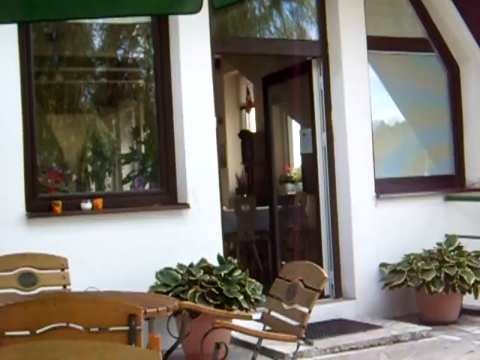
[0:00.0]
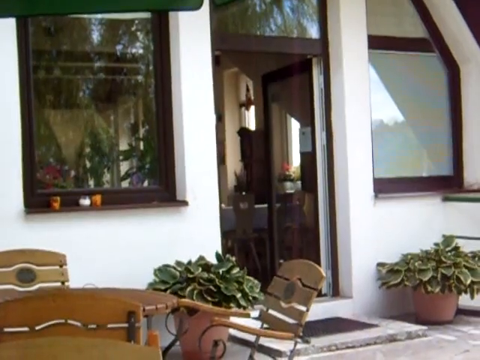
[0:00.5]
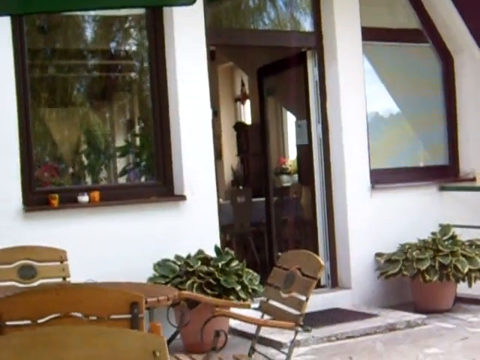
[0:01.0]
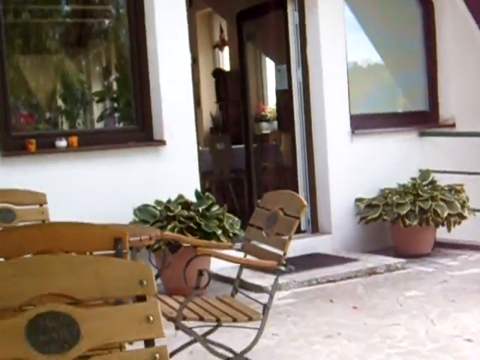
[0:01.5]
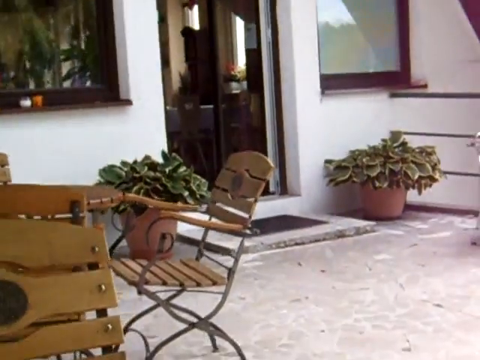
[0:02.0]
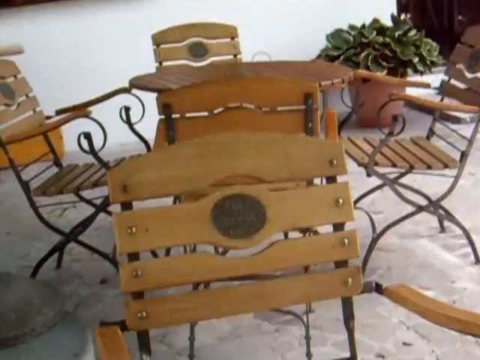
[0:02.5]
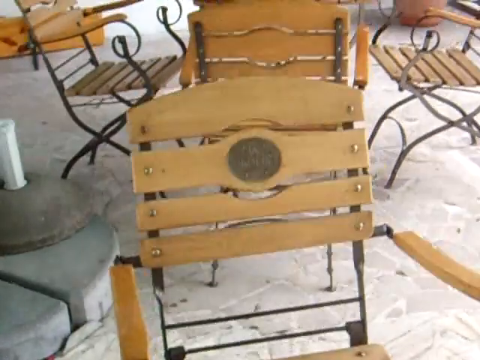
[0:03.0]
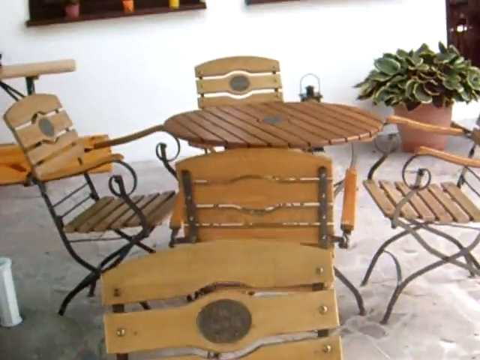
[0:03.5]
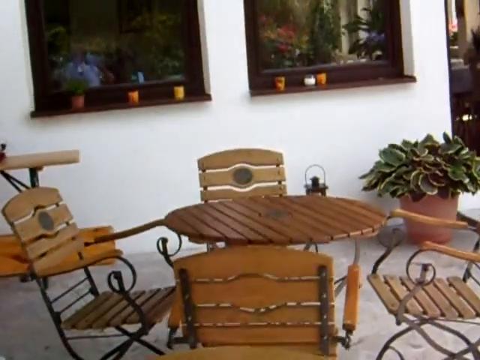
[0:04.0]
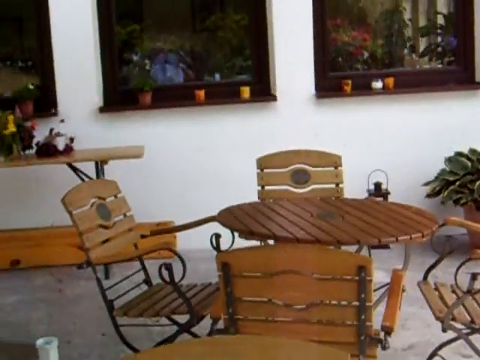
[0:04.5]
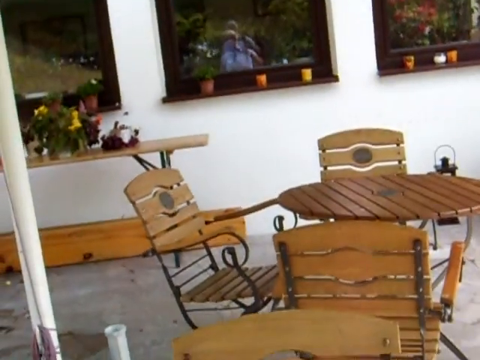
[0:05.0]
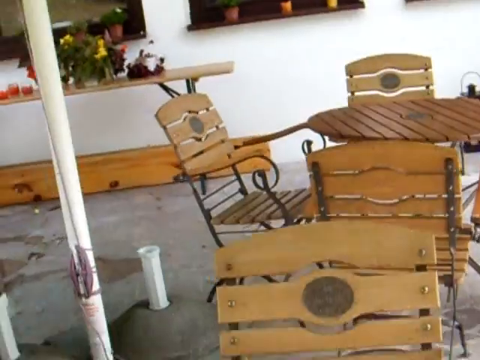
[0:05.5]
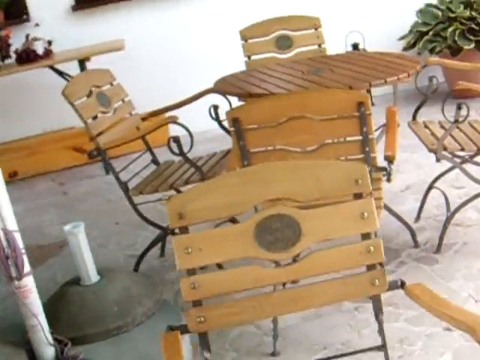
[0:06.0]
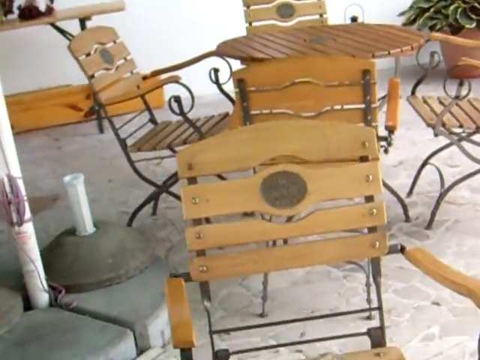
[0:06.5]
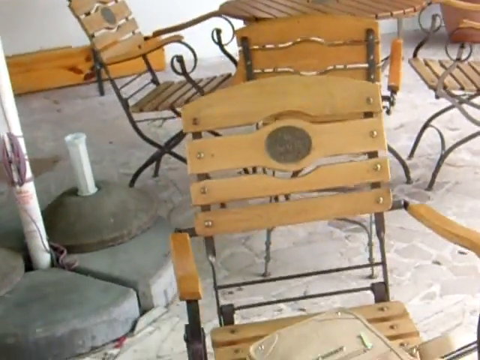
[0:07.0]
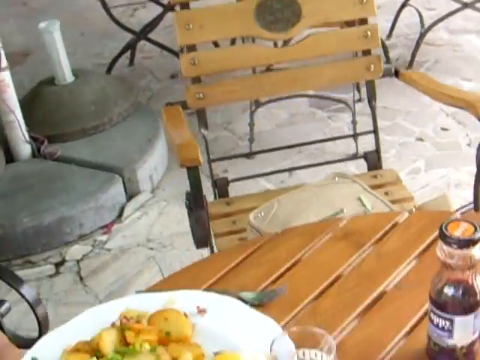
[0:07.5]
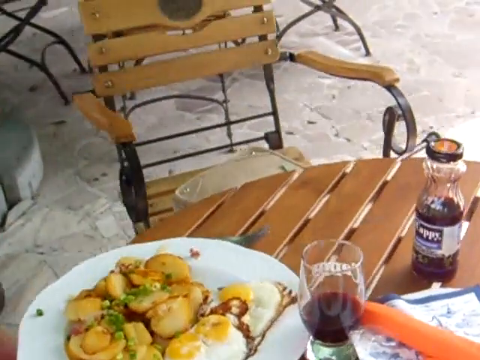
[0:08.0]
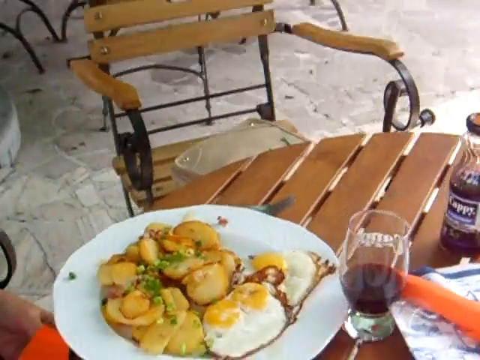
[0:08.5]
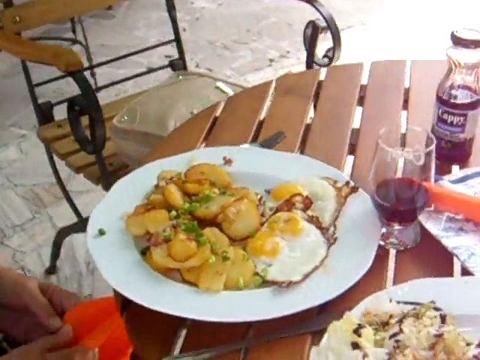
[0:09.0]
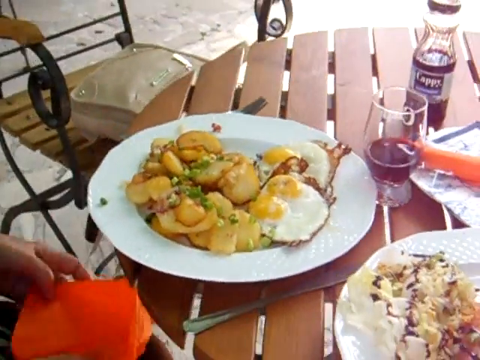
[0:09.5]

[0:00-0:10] The outside of a house is shown from its porch, with some lawn furniture for outdoor use. The house is beige with dark brown borders. On a table there is a white plate holding an unidentified food; the plate's center dips in deeper than a normal plate. In front of the plate is a glass cup of a red substance. The plate is viewed from the right side, and there is also a bottle, possibly of juice, with "Cappy" on it in white.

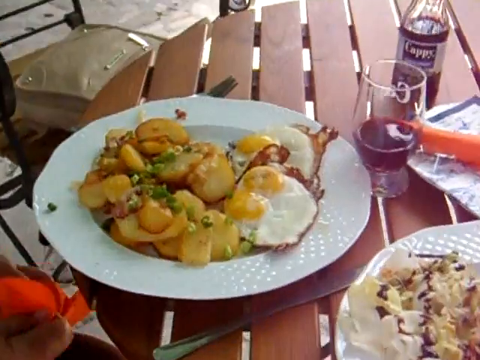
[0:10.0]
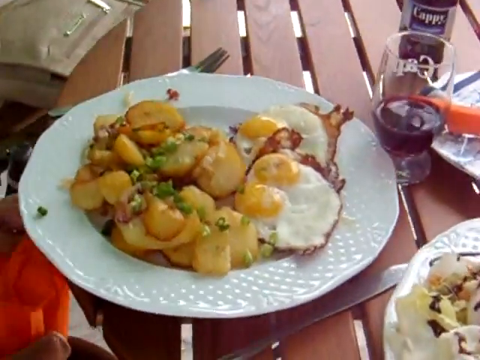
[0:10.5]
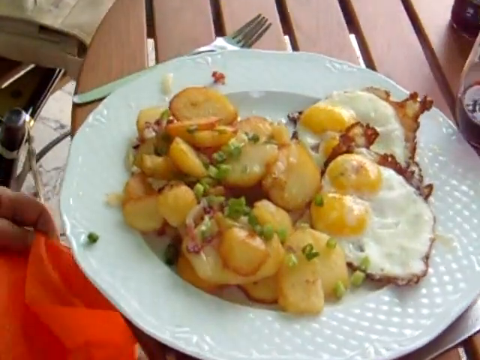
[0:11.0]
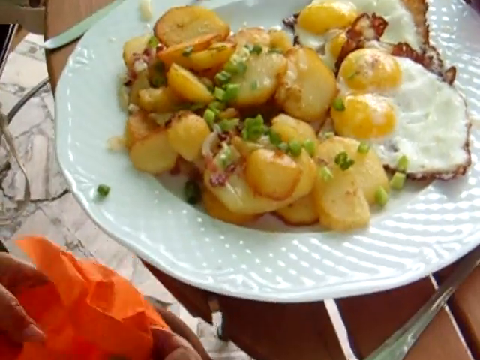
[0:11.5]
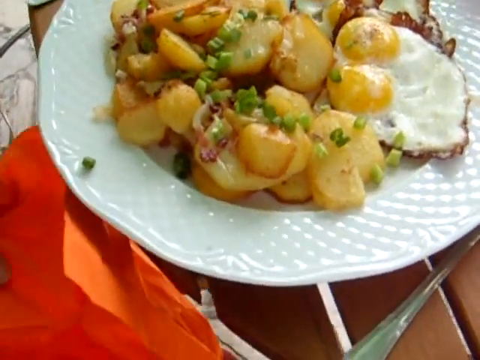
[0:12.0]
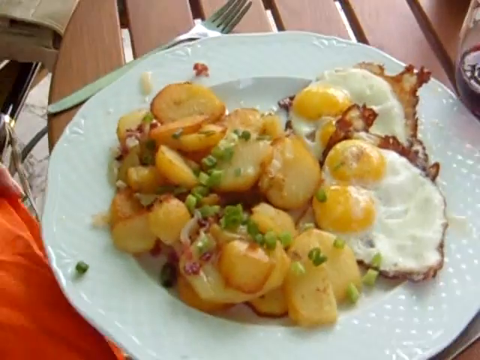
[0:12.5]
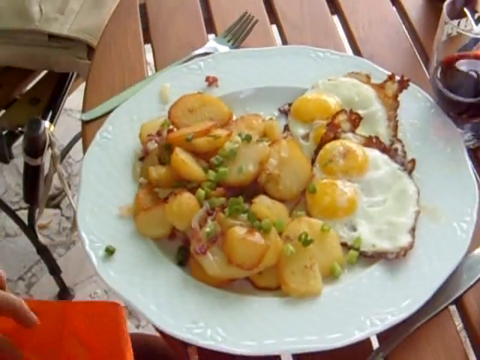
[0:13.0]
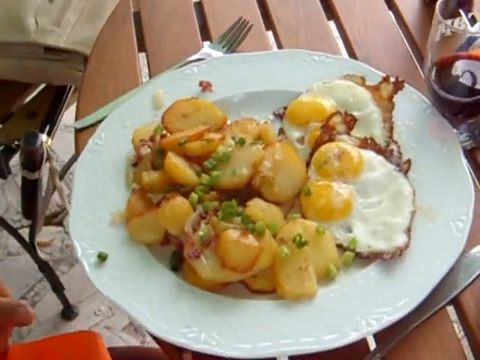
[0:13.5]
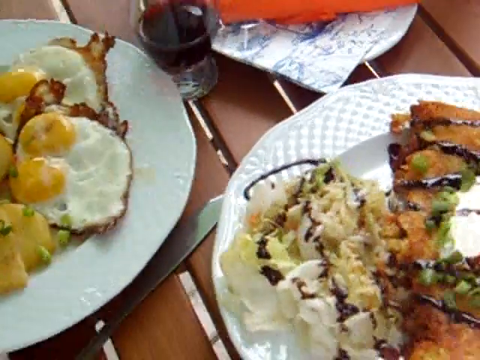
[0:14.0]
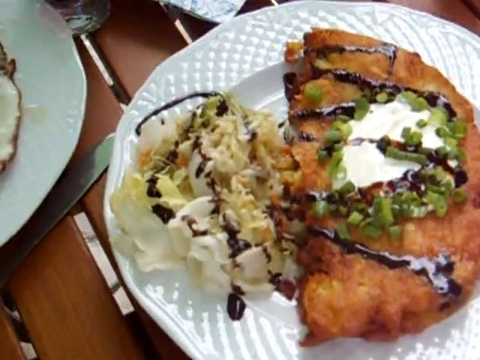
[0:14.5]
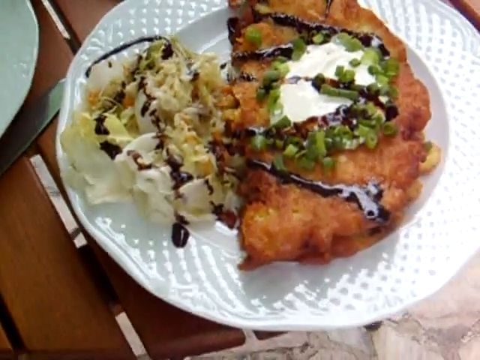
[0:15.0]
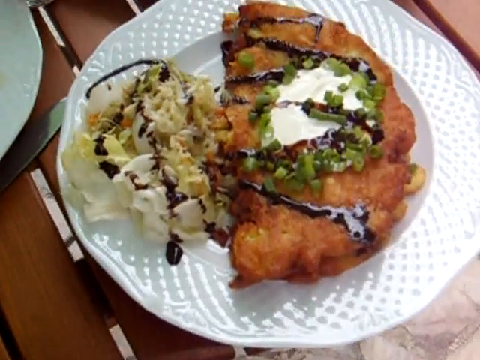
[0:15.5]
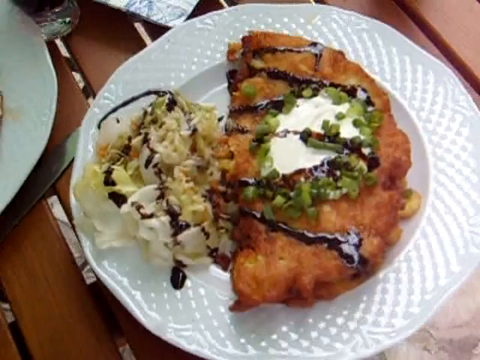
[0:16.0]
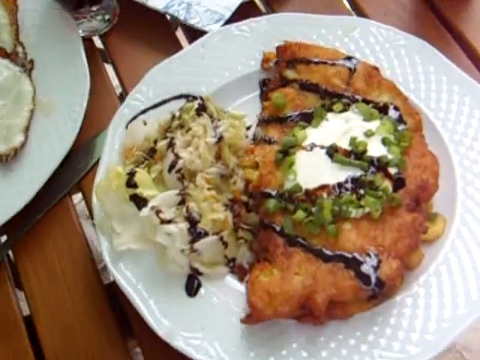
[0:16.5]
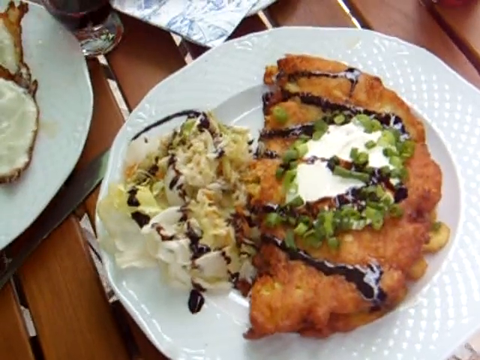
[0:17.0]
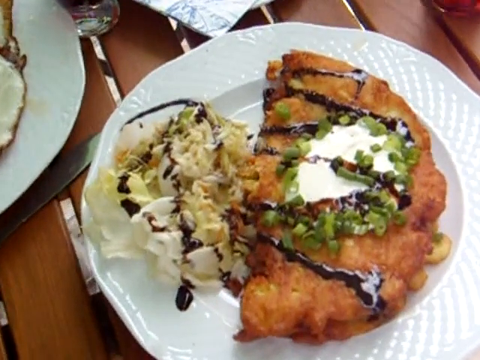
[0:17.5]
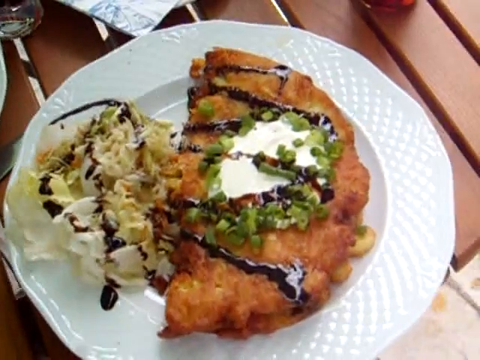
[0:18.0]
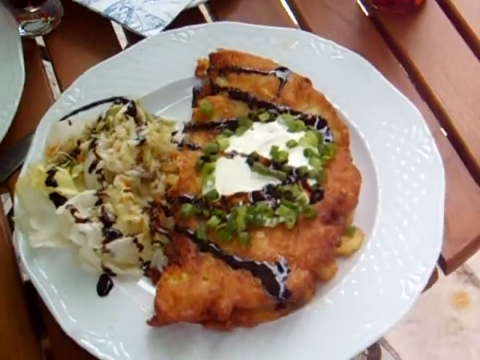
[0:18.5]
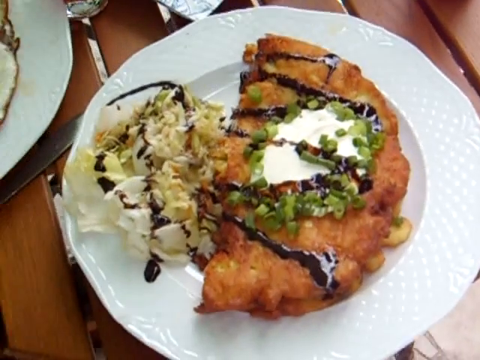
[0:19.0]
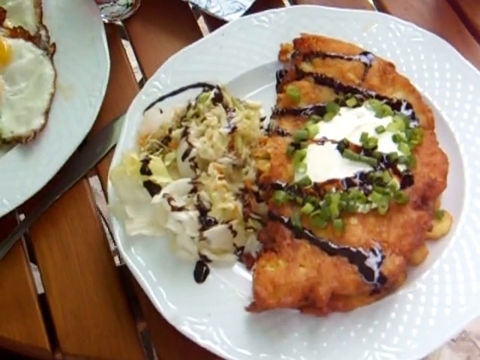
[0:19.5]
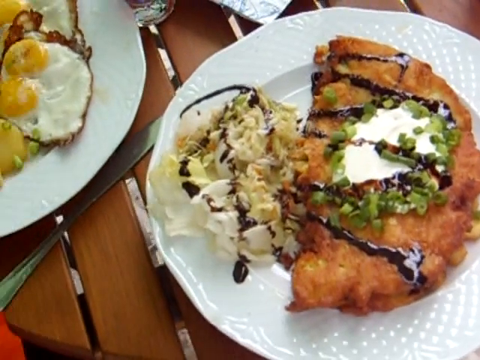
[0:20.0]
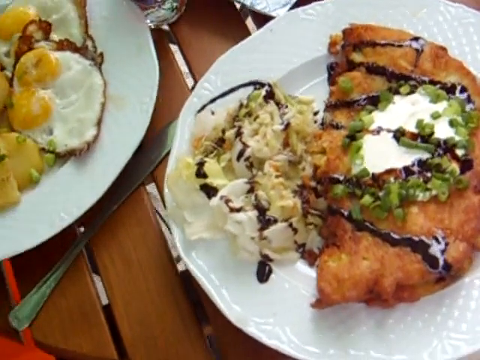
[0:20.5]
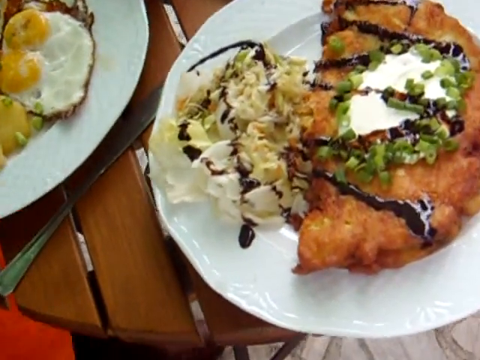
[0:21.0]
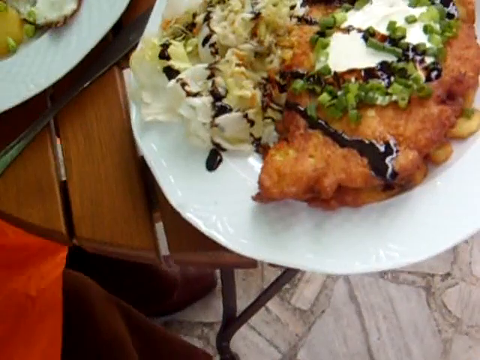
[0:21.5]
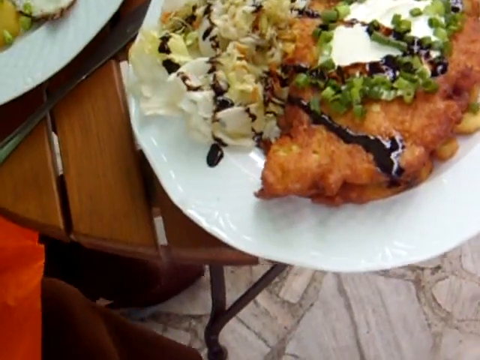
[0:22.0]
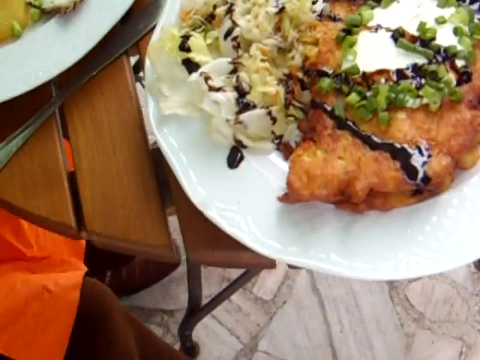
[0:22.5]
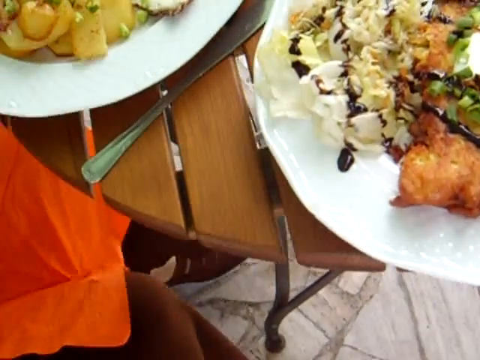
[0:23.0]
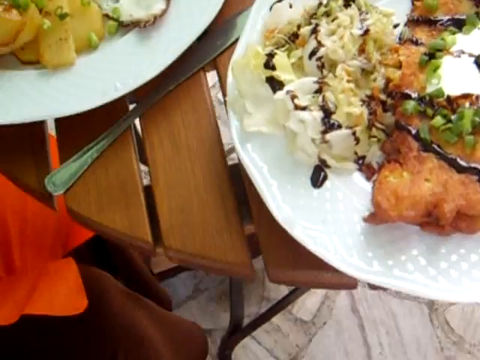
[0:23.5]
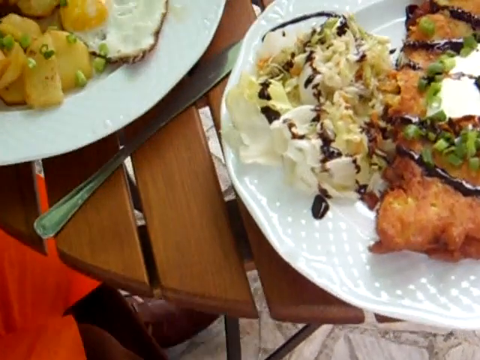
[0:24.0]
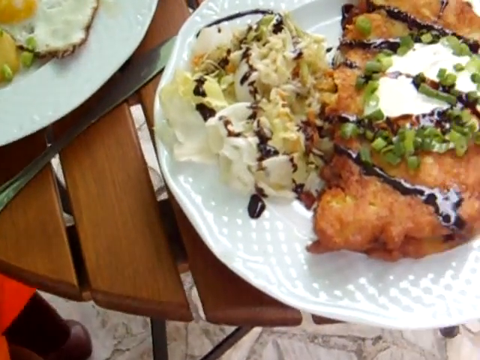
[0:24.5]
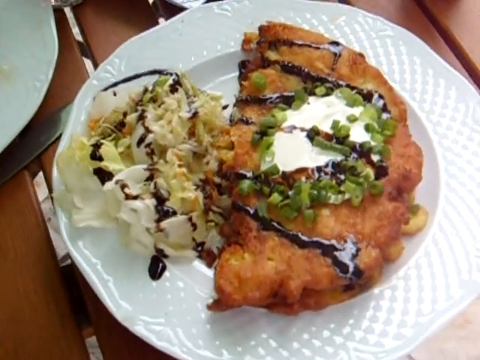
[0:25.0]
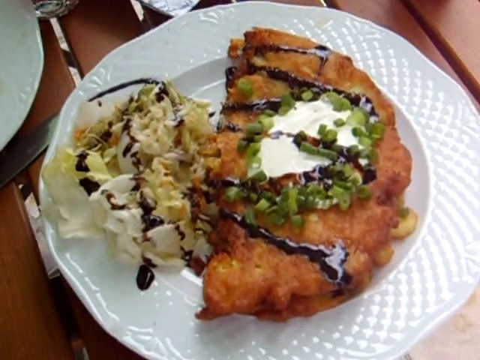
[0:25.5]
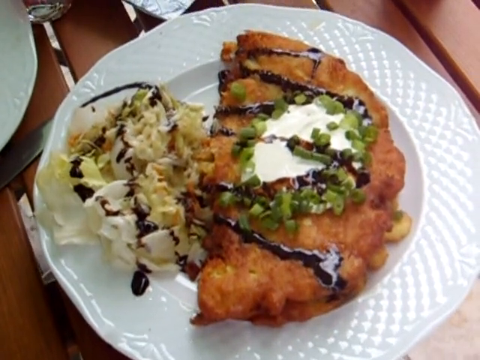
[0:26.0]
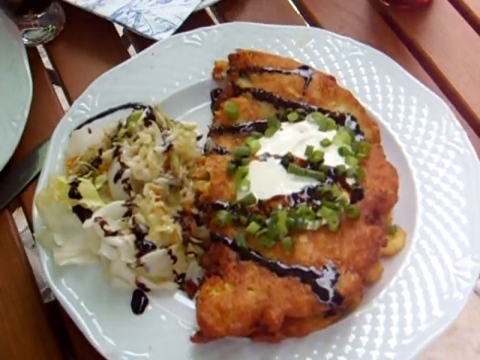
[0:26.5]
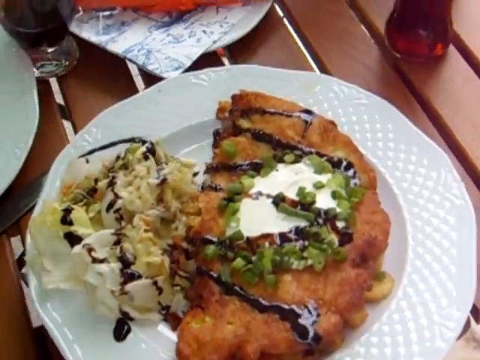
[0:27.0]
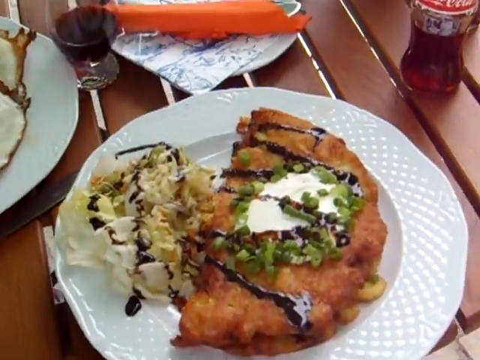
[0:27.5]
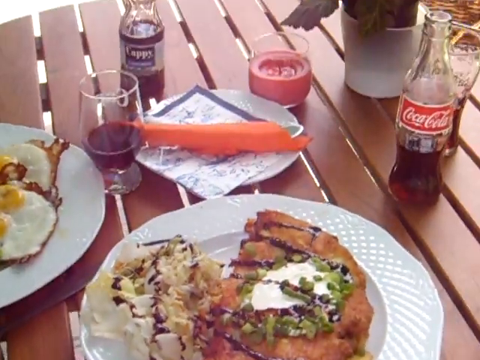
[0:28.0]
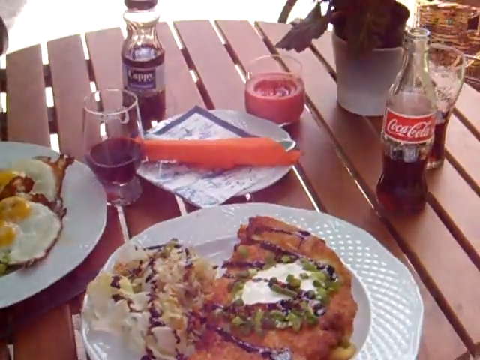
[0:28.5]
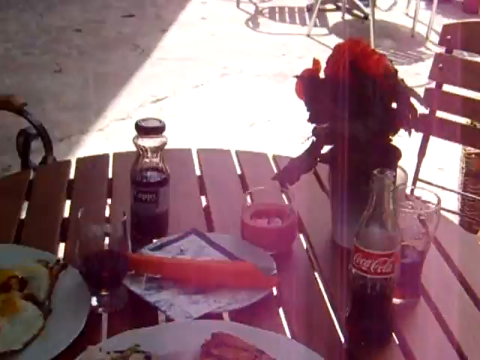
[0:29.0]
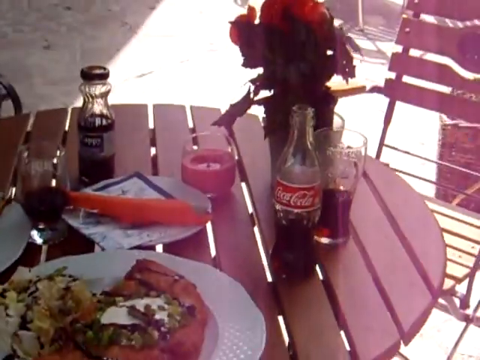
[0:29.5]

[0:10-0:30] The camera zooms in on the plate until it almost takes up the full screen. On it are potatoes and sunny side up eggs, each egg with two yolks, and the dish looks garnished with green onion. A silver fork is sitting on the left of the plate. To the right of it is another plate also filled with food: what looks like some kind of empanada, a flaky pastry, with what looks like a salad next to it. It has some kind of black sauce over the top and cut green onions on it. There is a bottle of Coca-Cola that looks like an original glass bottle.